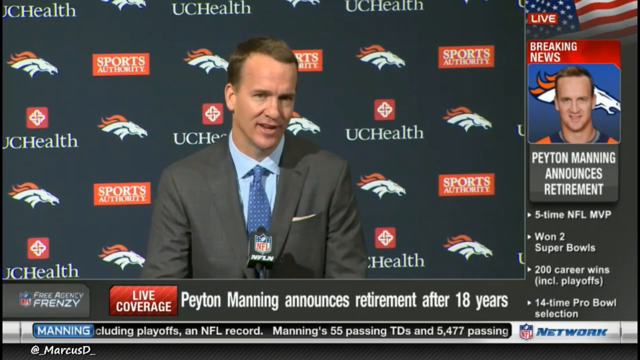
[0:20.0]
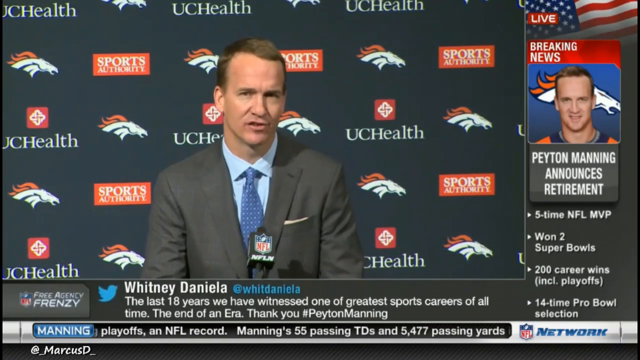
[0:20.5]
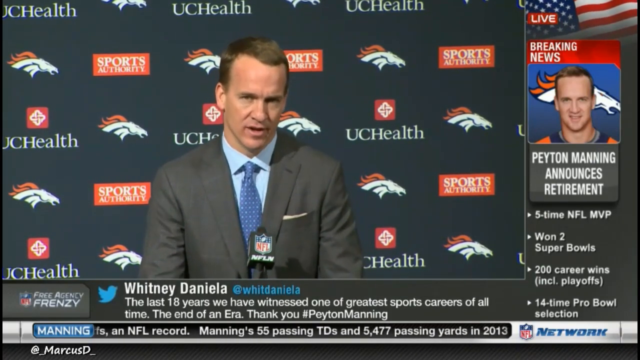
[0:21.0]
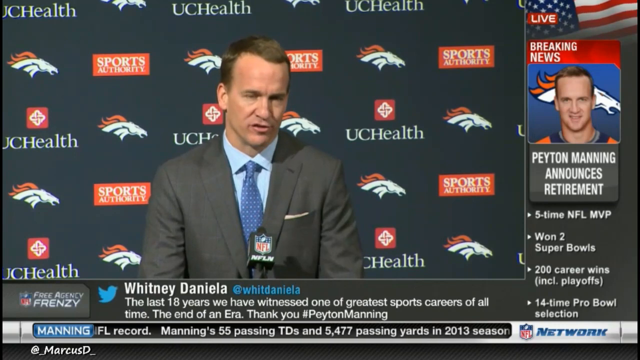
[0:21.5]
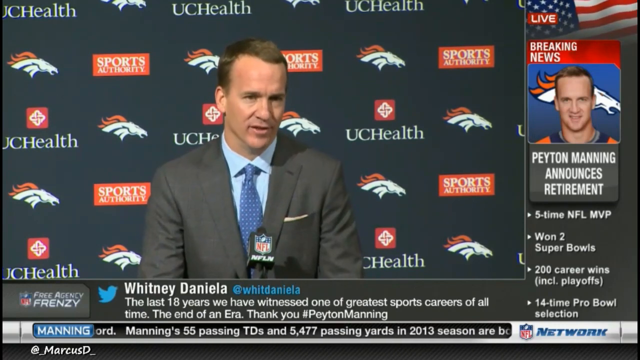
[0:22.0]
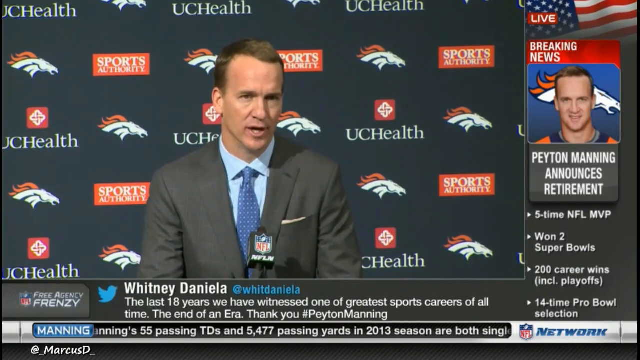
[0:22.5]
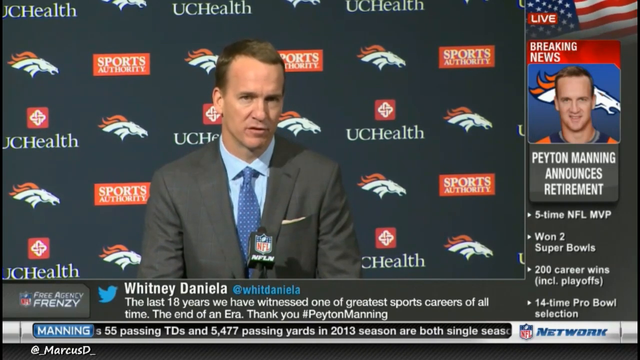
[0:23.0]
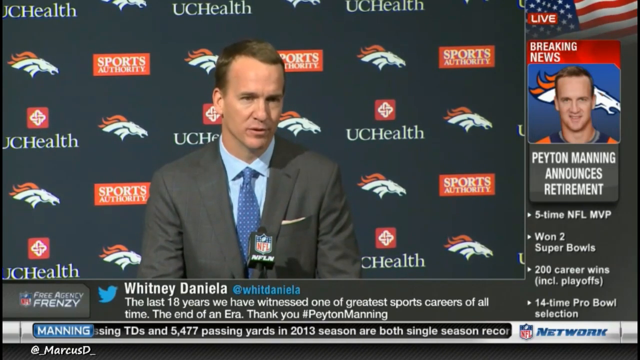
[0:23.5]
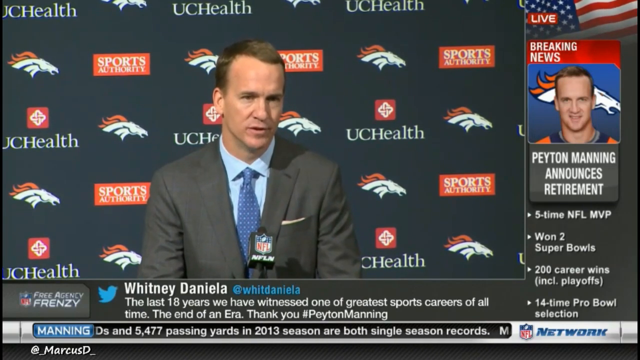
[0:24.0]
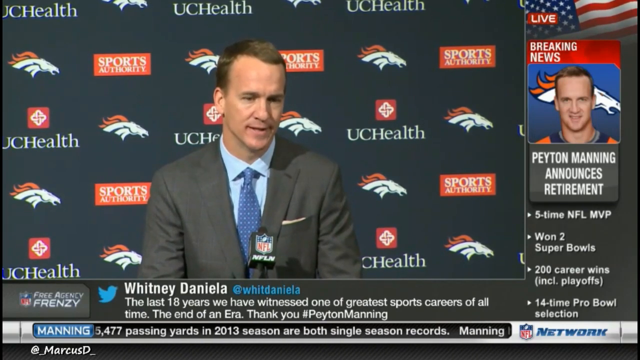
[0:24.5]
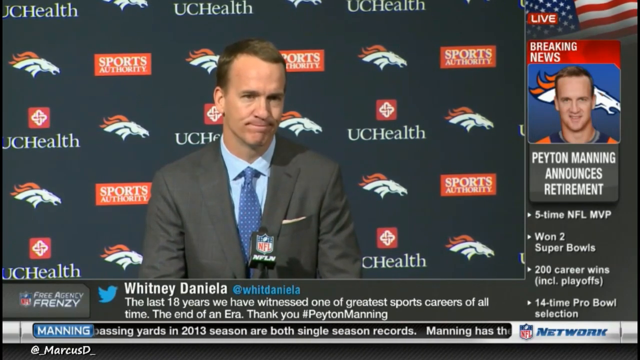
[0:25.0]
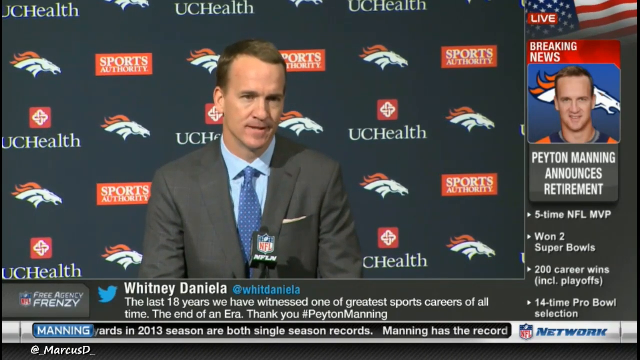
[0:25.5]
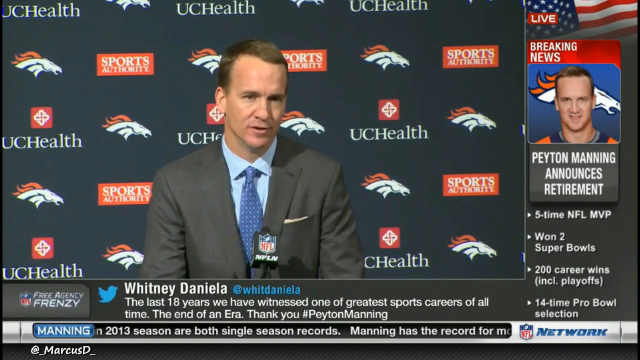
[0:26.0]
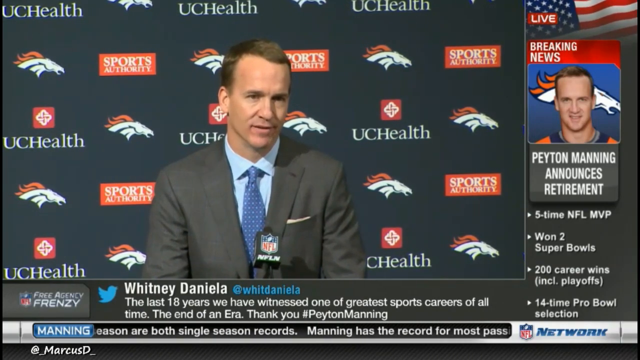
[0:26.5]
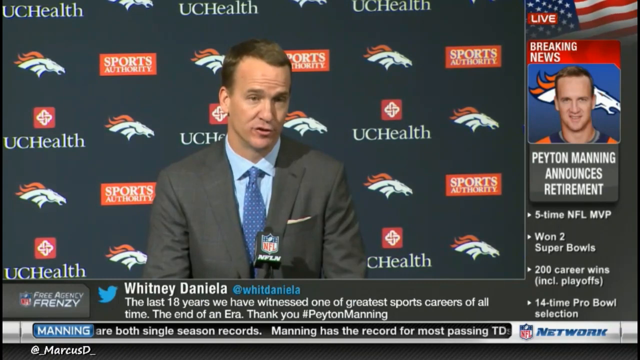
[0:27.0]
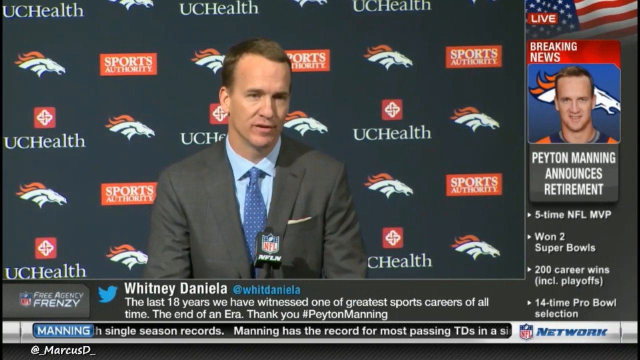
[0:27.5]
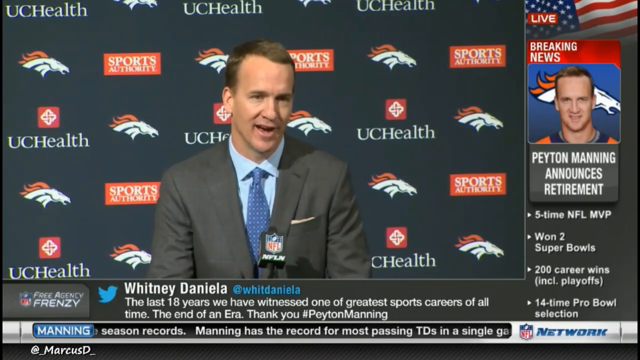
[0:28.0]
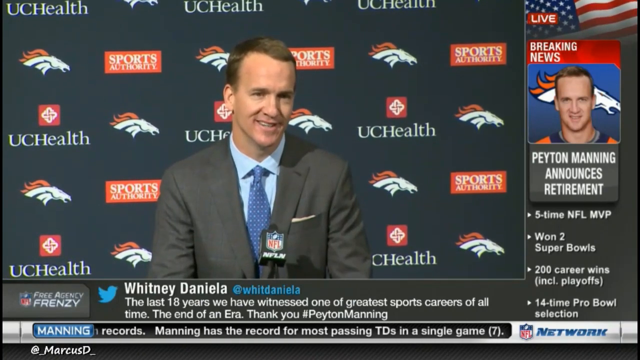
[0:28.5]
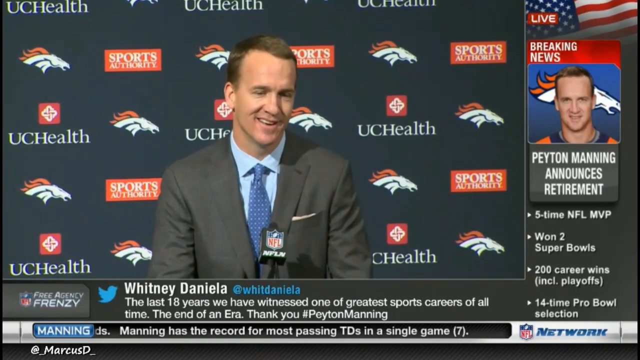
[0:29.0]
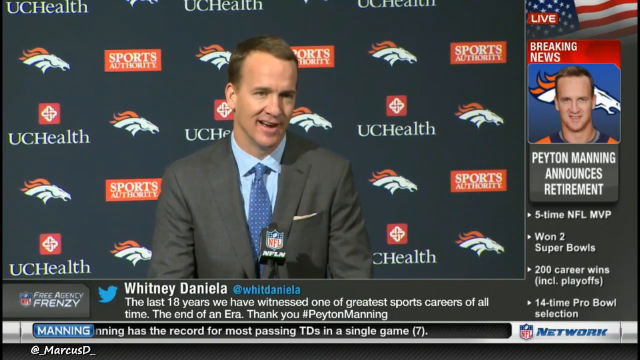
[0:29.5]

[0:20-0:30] Peyton Manning speaks with a slight smile, showing some determination. The announcement is shown as breaking news, broadcast live. A United States flag is in the upper right corner of the background. The wall behind Manning is black with white text reading UC Healthy, along with square UC Healthy logos: each square is red with a white diamond inside and a cross in the middle. A white horse head is also on the black surface, which could be a black cloth, wall or chart; it is not clear which.